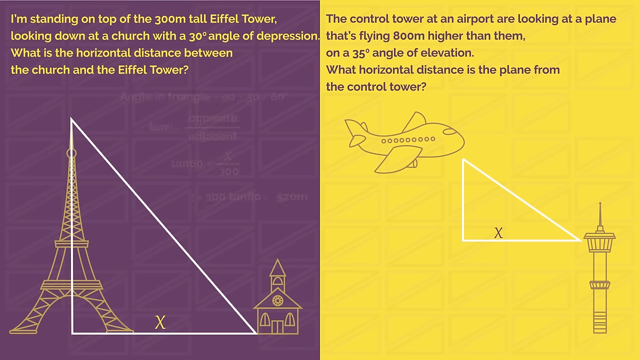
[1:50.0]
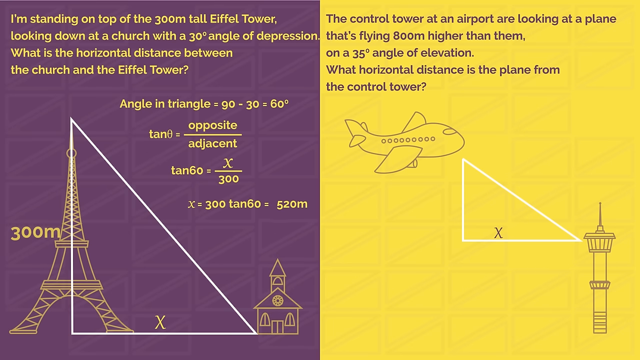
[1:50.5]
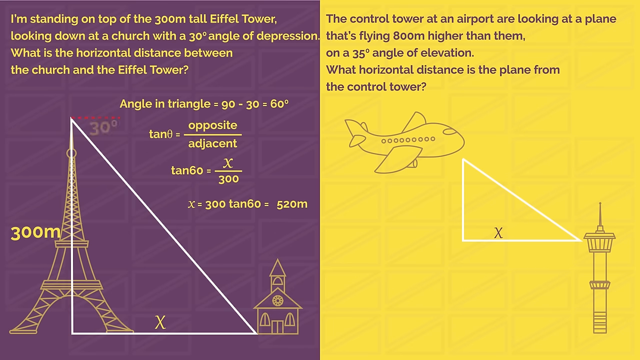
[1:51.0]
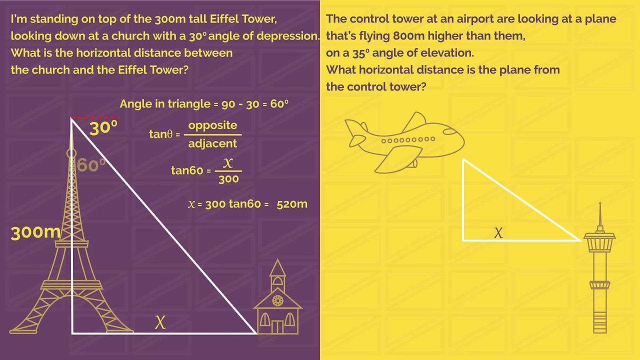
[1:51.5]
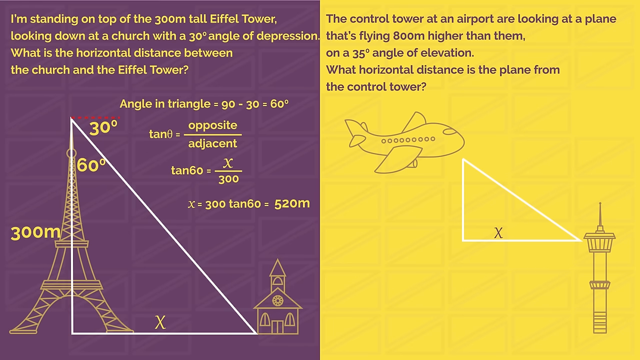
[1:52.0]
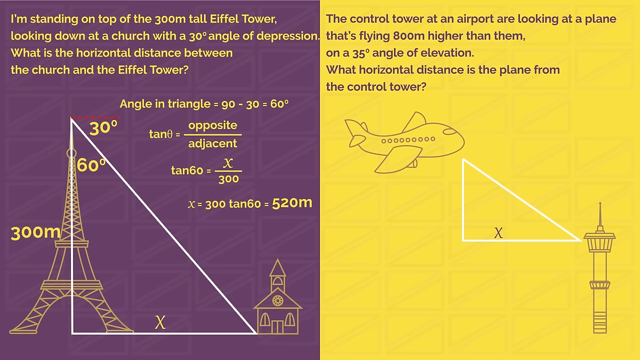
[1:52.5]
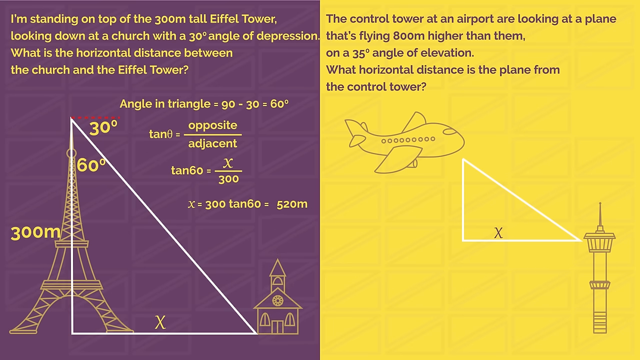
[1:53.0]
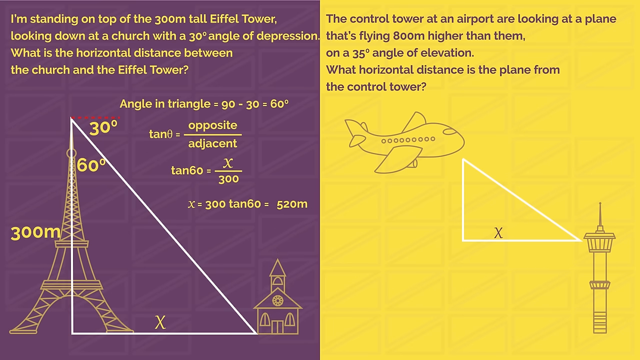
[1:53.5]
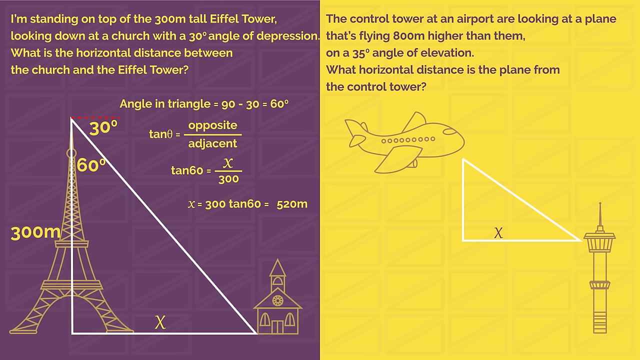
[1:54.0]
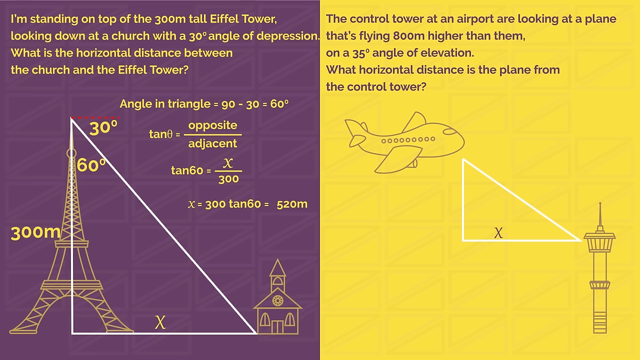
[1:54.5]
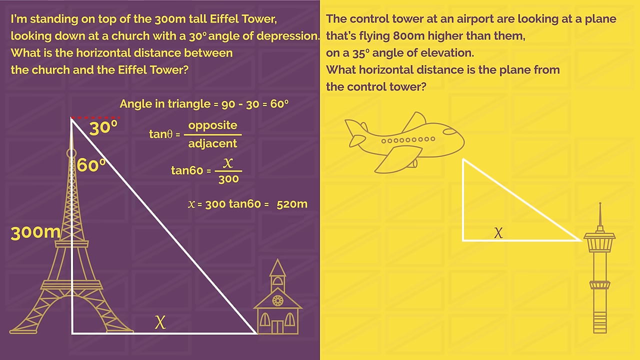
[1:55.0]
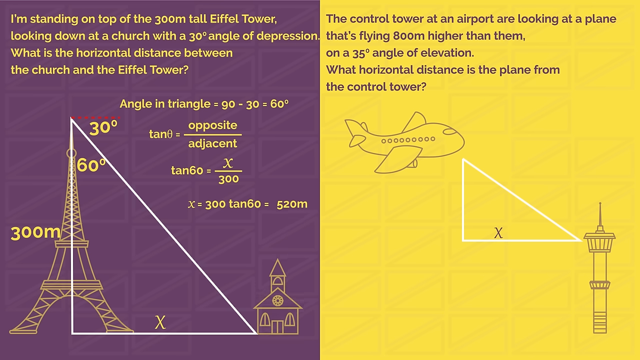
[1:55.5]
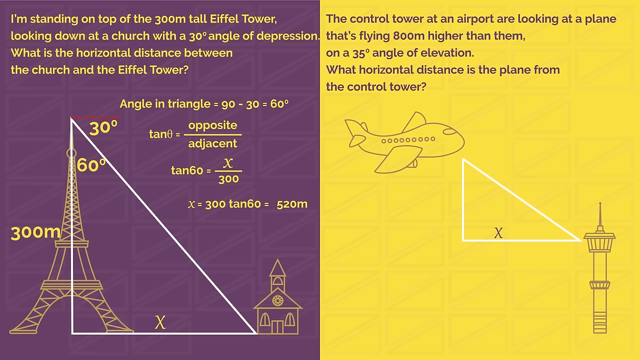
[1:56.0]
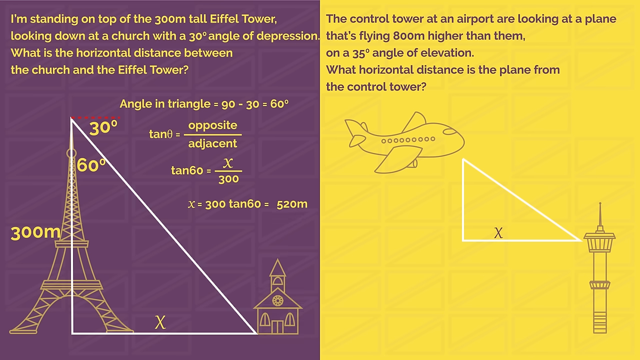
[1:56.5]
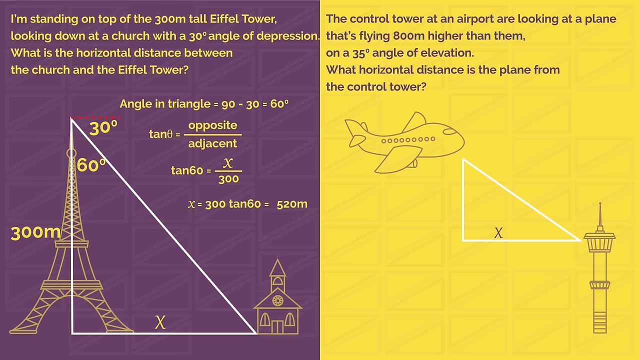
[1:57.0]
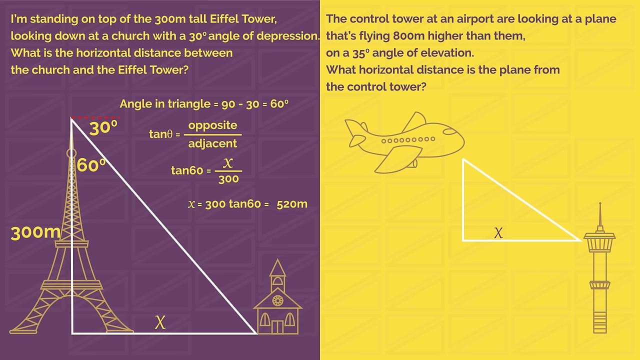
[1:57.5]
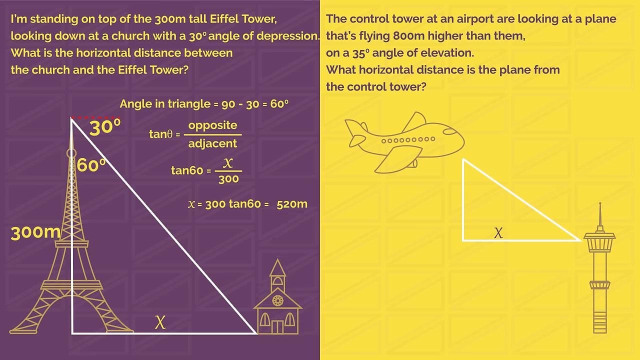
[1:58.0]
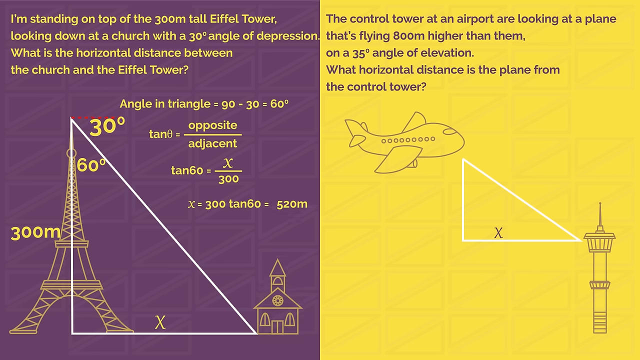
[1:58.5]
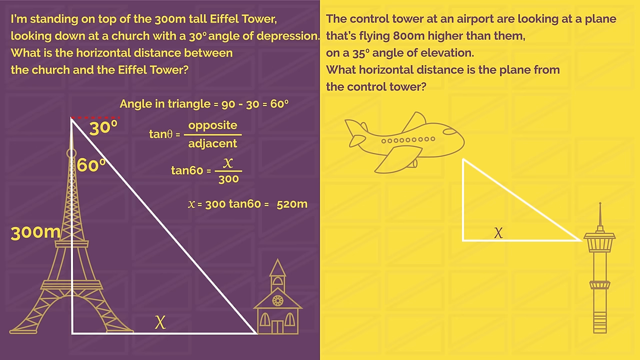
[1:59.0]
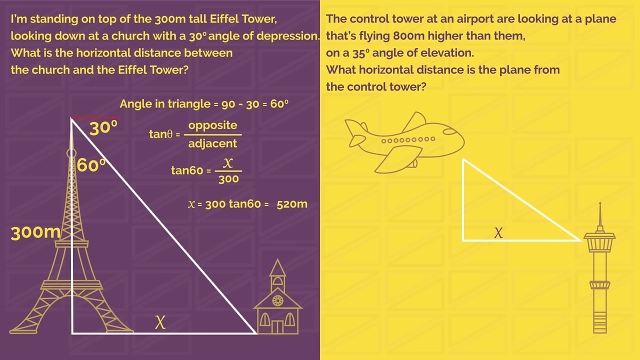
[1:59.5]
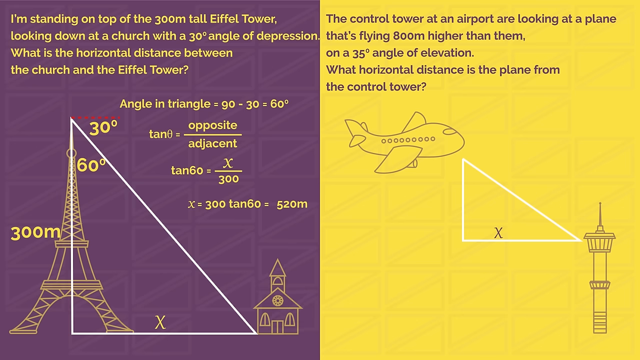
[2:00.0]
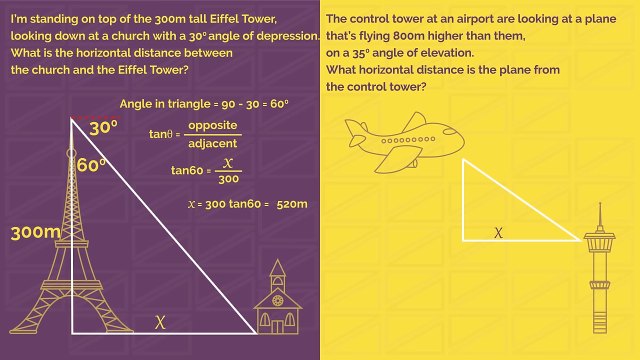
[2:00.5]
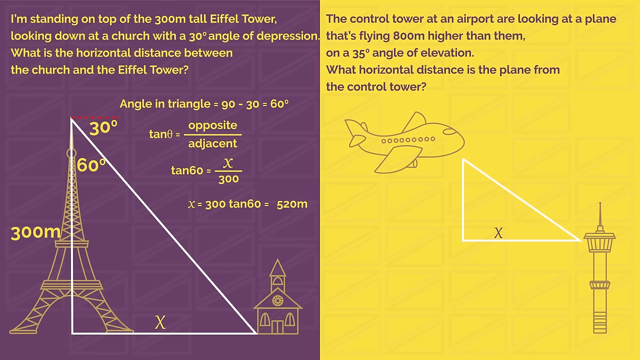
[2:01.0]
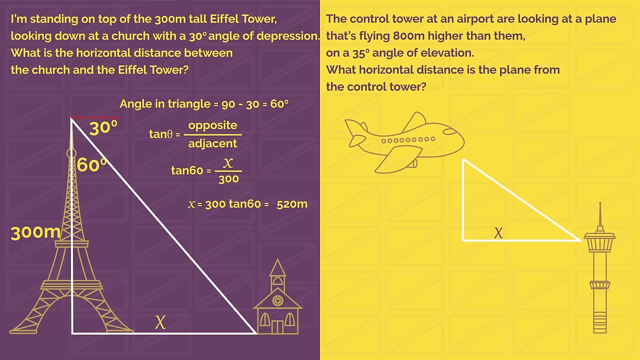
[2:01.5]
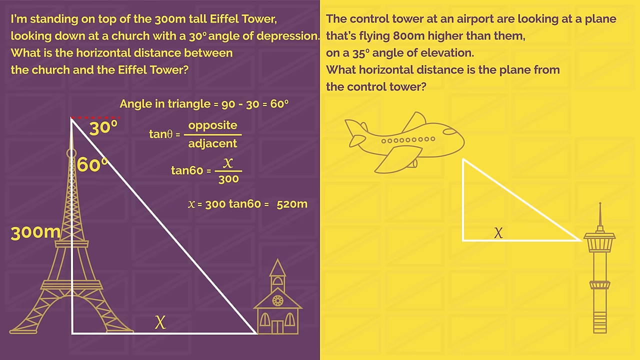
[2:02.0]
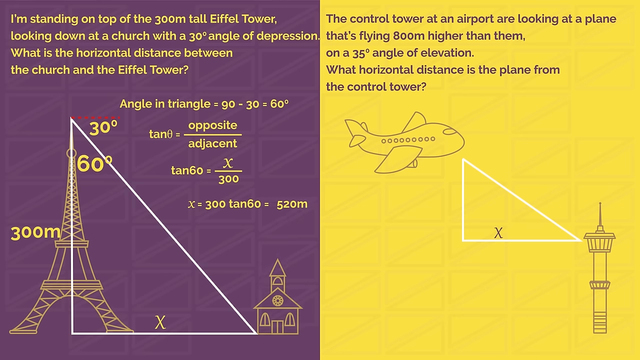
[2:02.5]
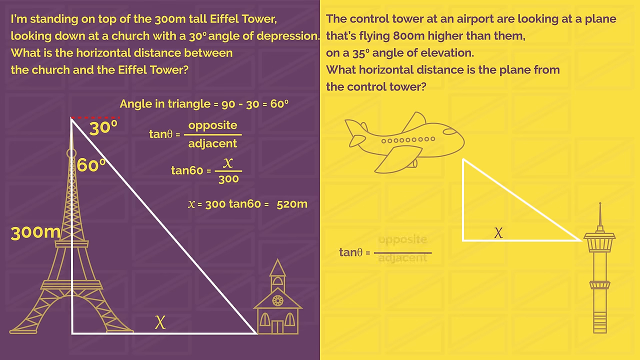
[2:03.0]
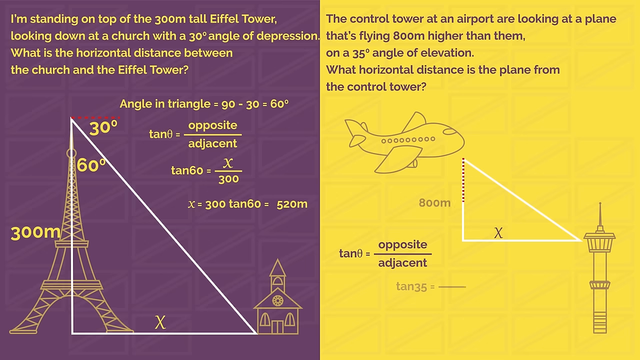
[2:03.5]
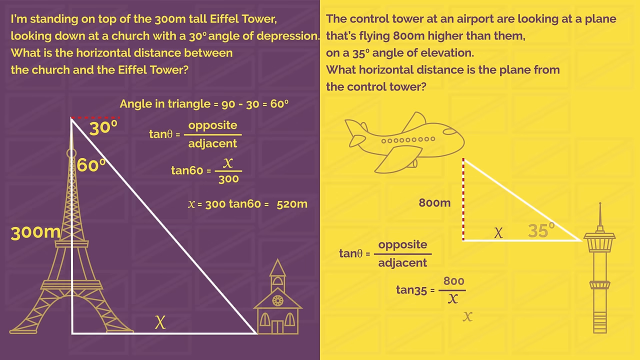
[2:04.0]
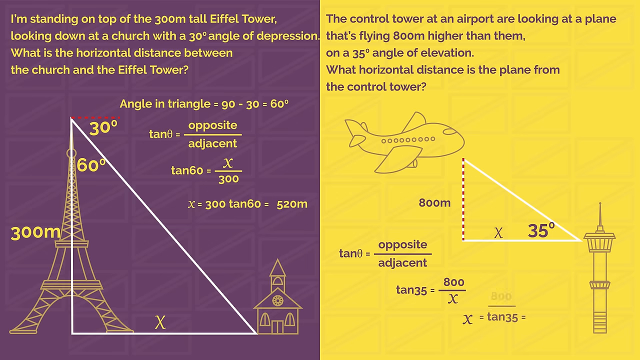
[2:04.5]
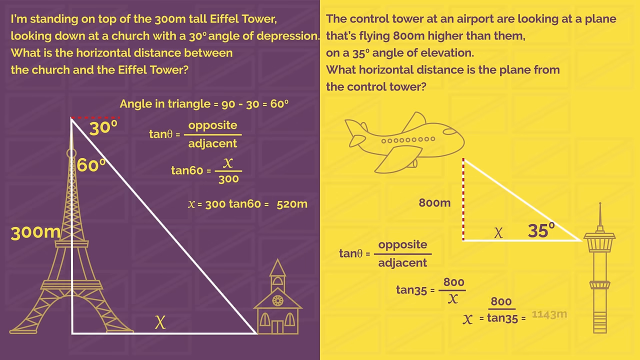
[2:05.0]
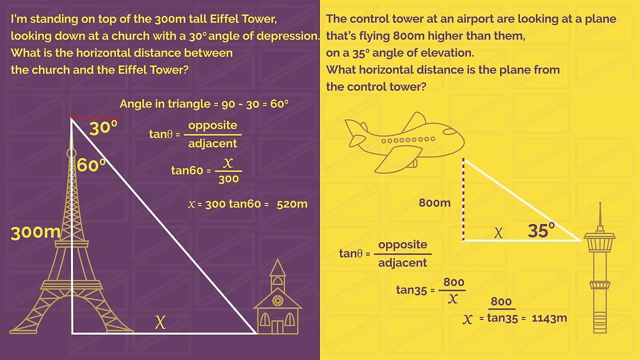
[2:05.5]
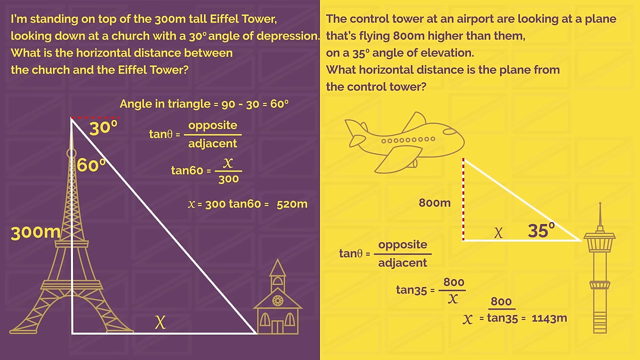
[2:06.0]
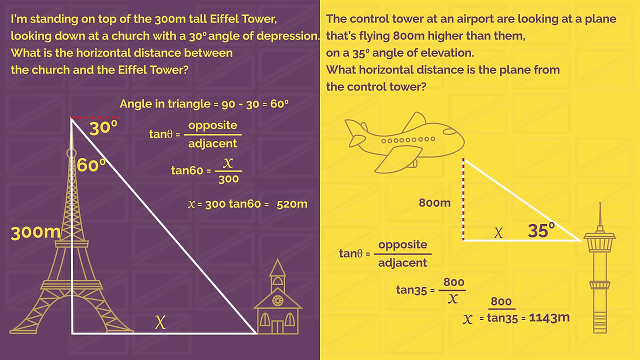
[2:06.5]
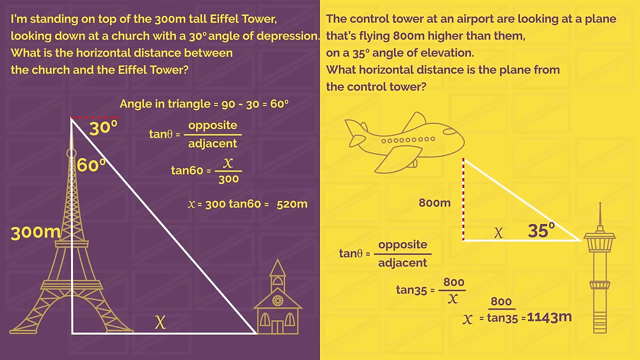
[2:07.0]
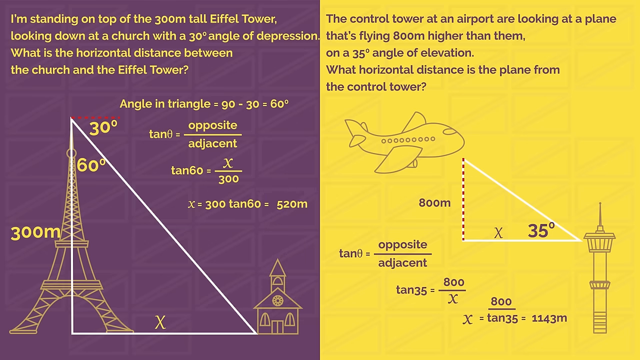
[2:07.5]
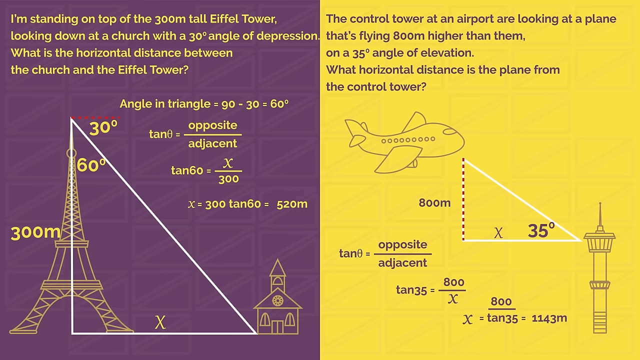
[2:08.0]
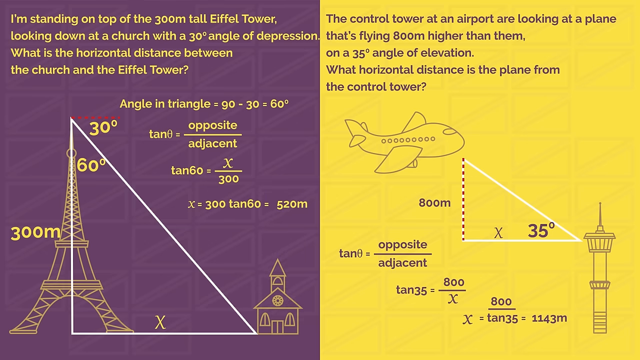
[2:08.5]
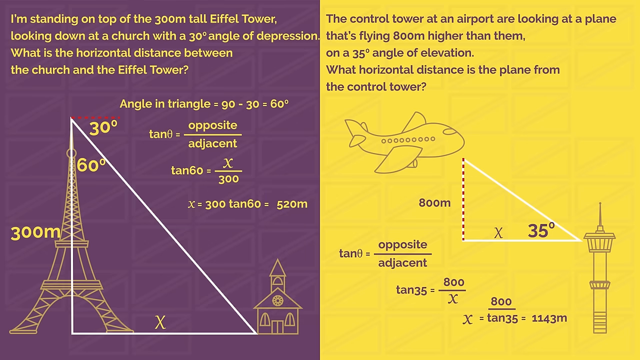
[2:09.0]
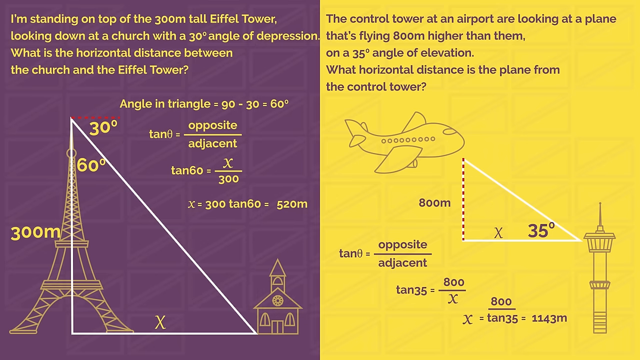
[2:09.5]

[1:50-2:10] The screen splits into two sides: the left has a purple background and the right a yellow background. On the left, yellow text reads "I'm standing on top of the 300-meter tall Eiffel Tower, looking down at a church with a 30-degree angle of depression. What is the horizontal distance between the church and the Eiffel Tower?" On the right, purple text reads "the control tower at an airport are looking at a plane that's flying 800 meters higher than them. On a 35-degree angle of elevation, what horizontal distance is the plane from the control tower?" On the left side, the answer is worked out: a white triangle is overlaid on the Eiffel Tower, its known left side of 300 meters in height is shown along with a 60-degree angle, and tangent is used to calculate the distance.